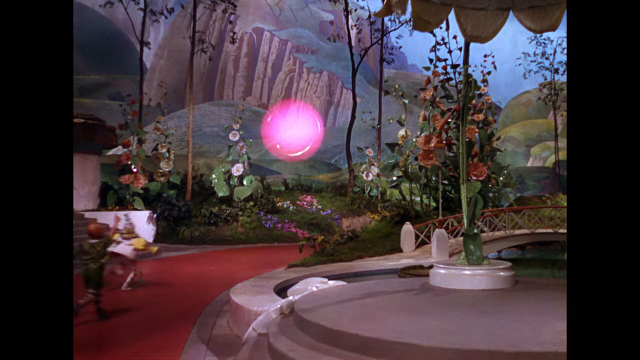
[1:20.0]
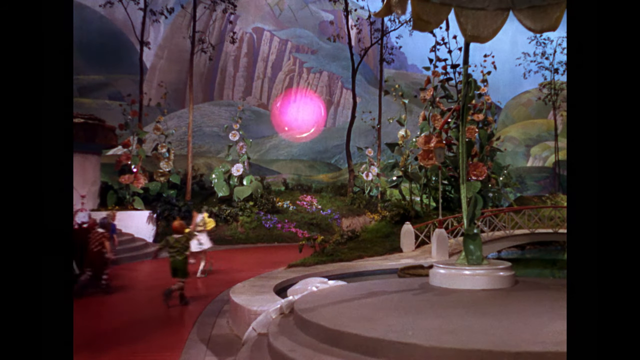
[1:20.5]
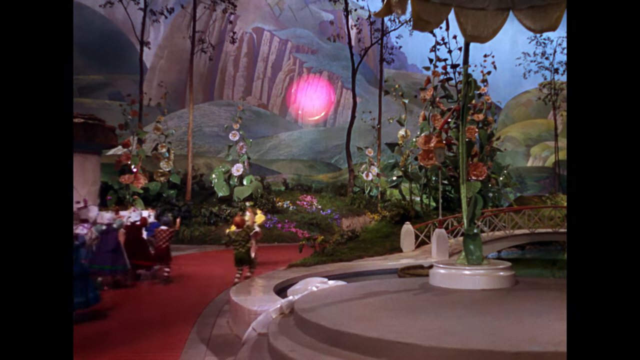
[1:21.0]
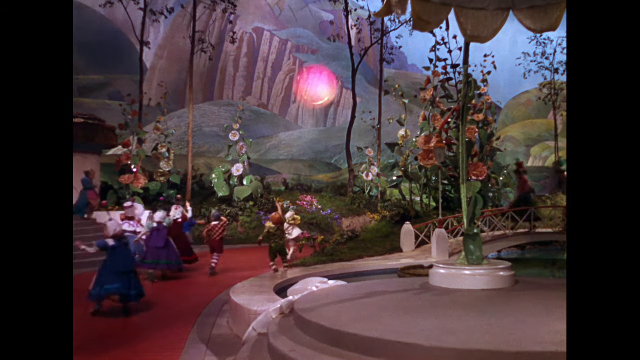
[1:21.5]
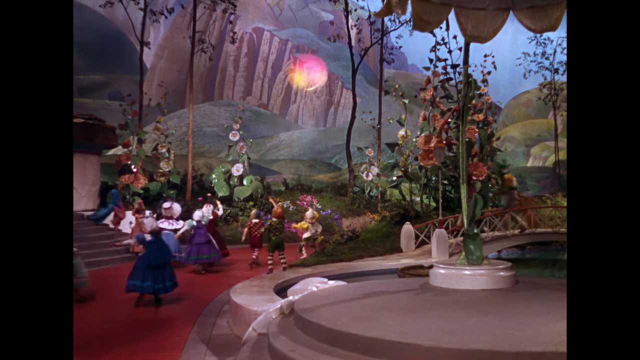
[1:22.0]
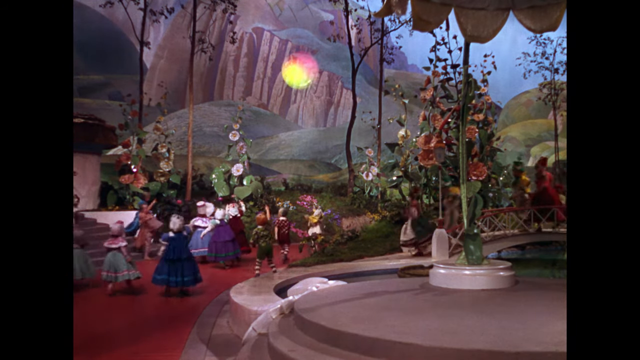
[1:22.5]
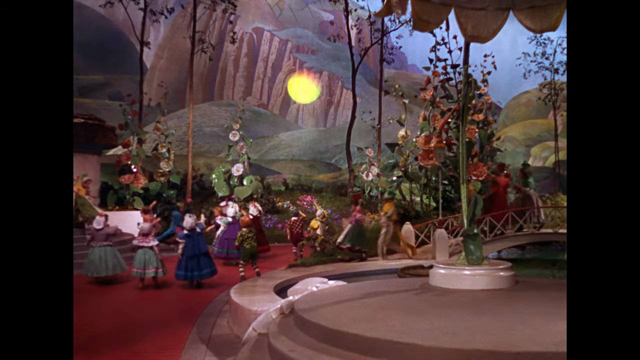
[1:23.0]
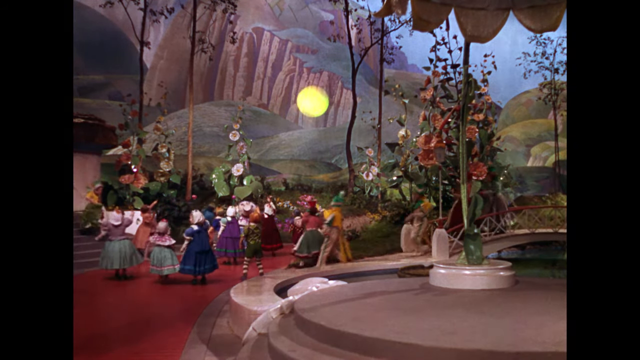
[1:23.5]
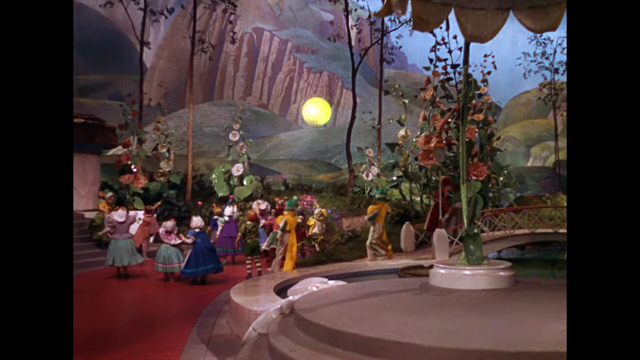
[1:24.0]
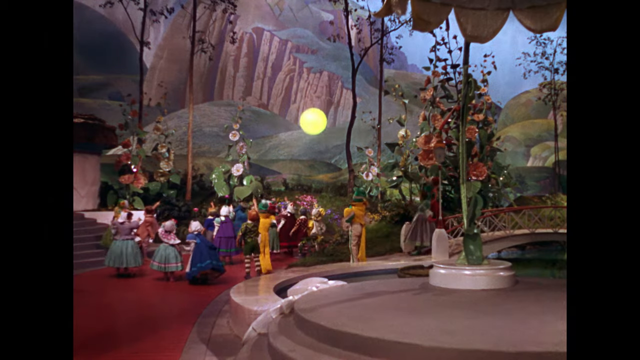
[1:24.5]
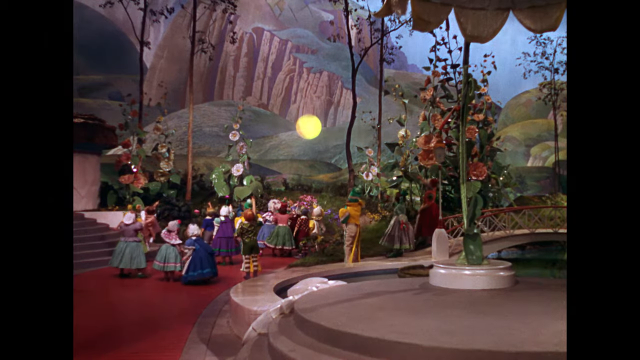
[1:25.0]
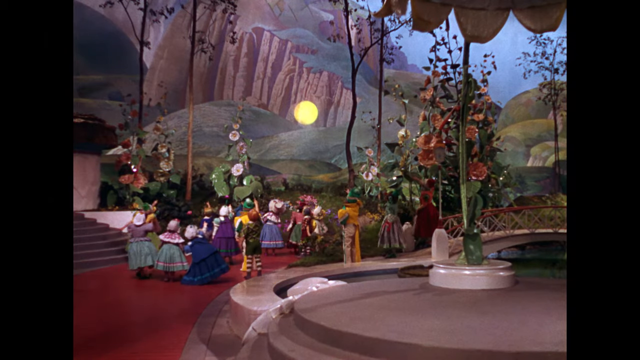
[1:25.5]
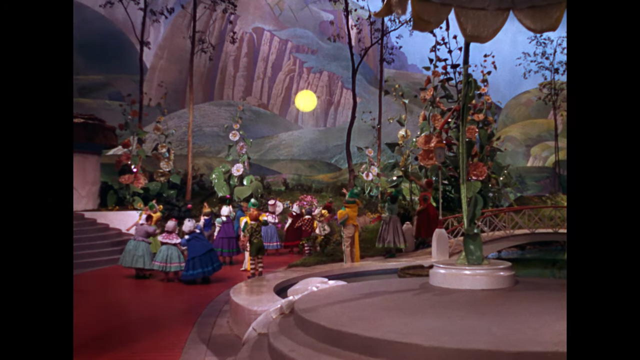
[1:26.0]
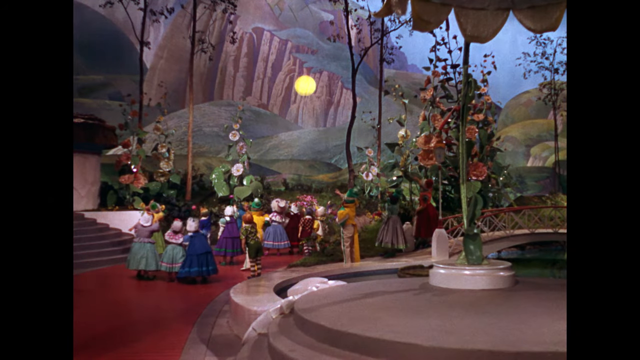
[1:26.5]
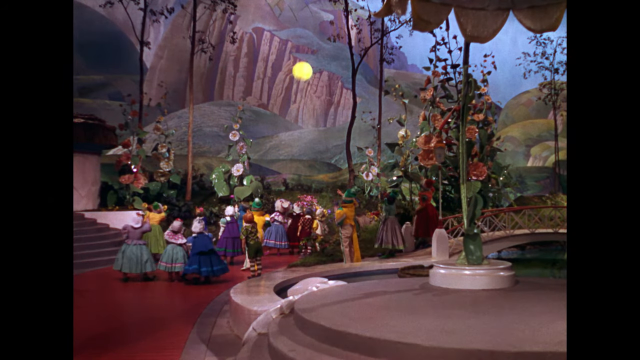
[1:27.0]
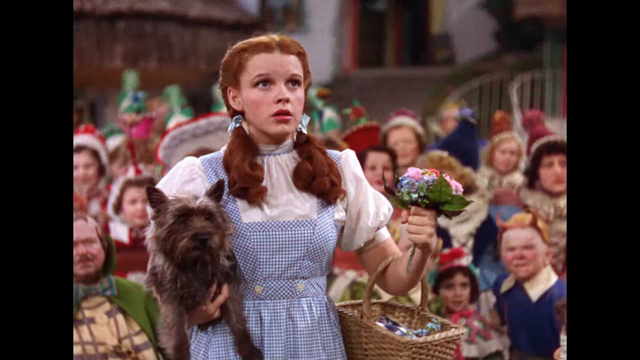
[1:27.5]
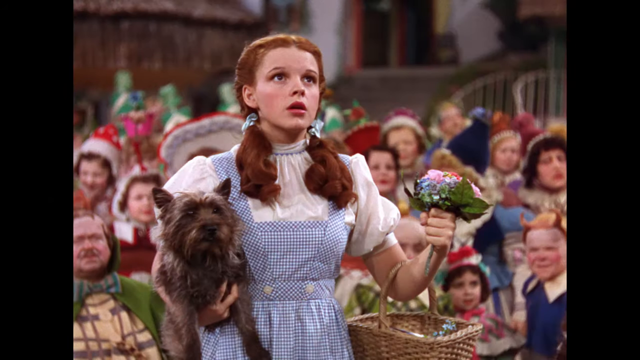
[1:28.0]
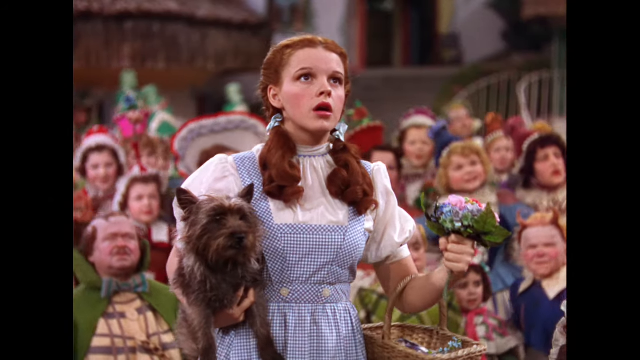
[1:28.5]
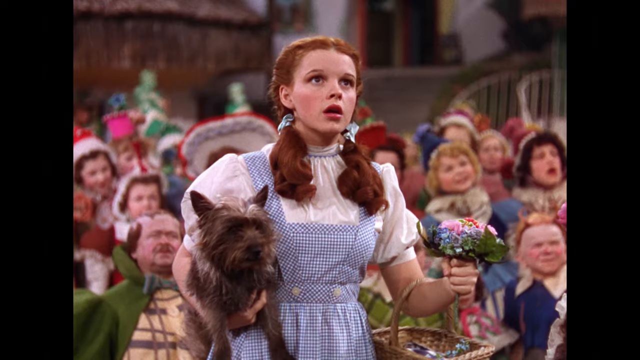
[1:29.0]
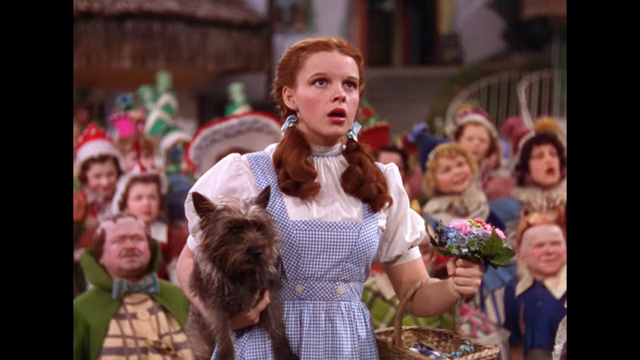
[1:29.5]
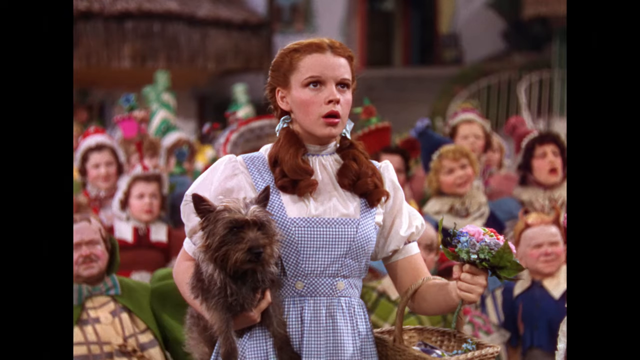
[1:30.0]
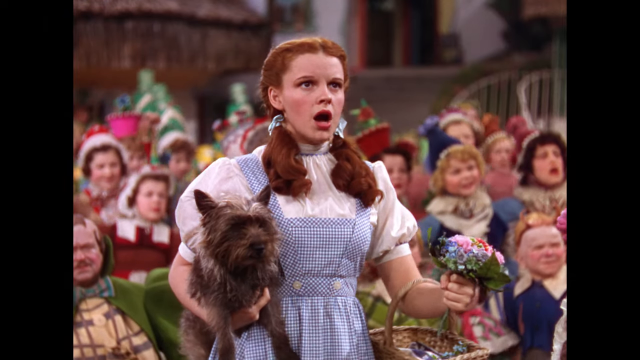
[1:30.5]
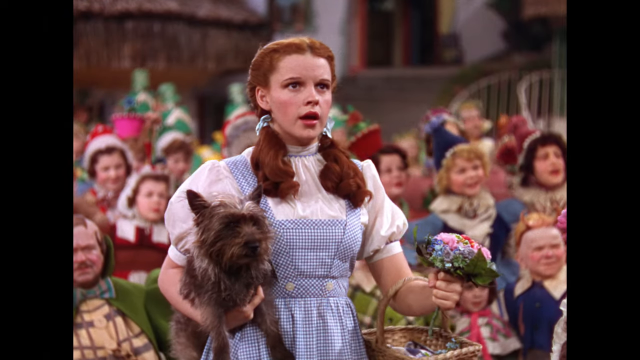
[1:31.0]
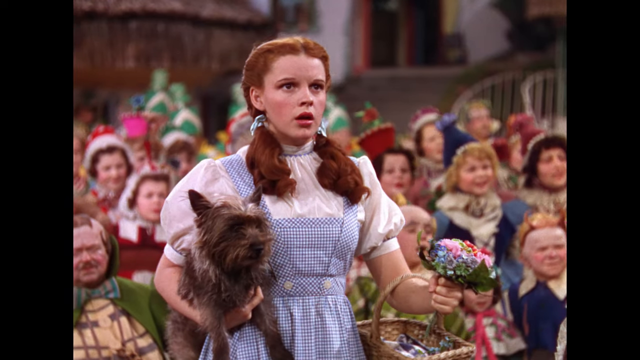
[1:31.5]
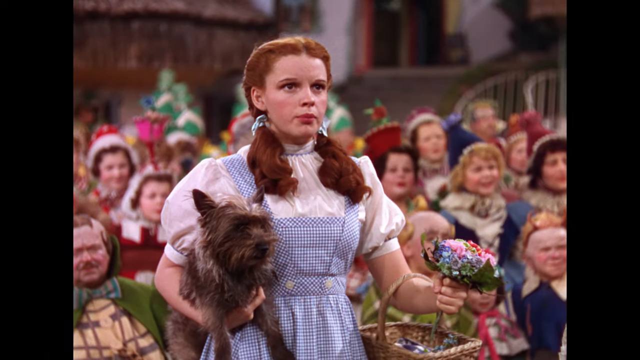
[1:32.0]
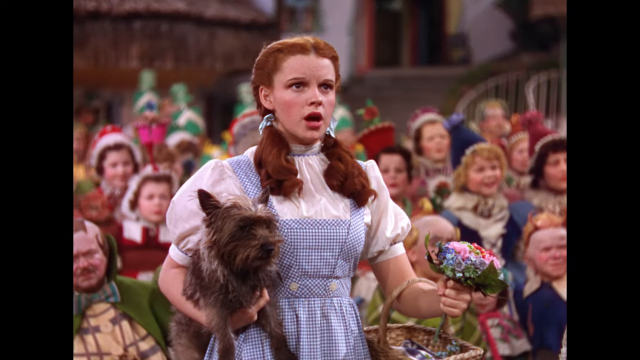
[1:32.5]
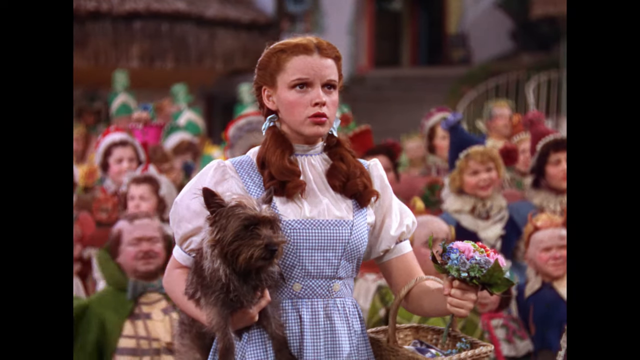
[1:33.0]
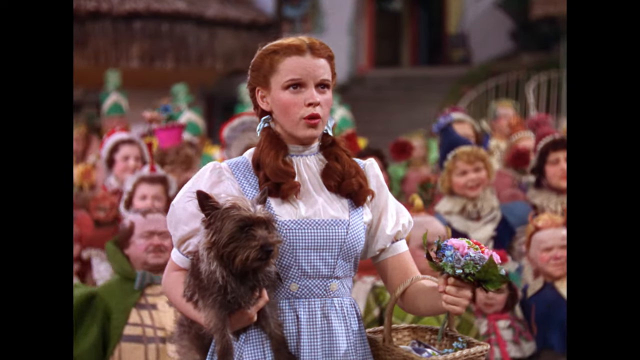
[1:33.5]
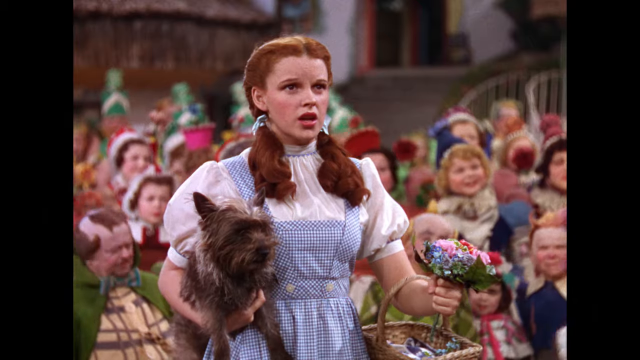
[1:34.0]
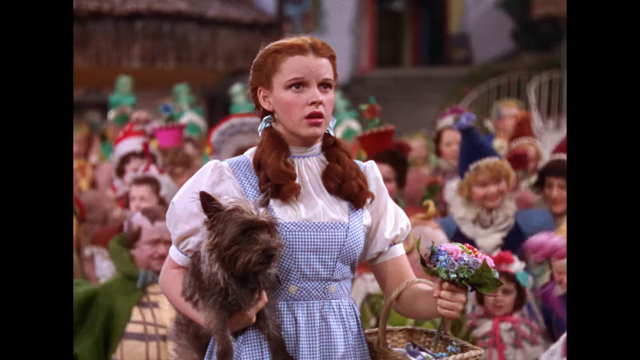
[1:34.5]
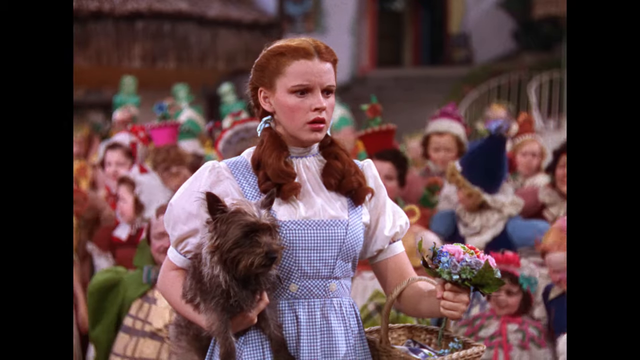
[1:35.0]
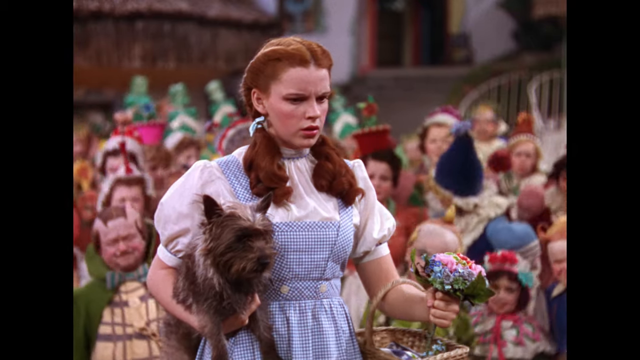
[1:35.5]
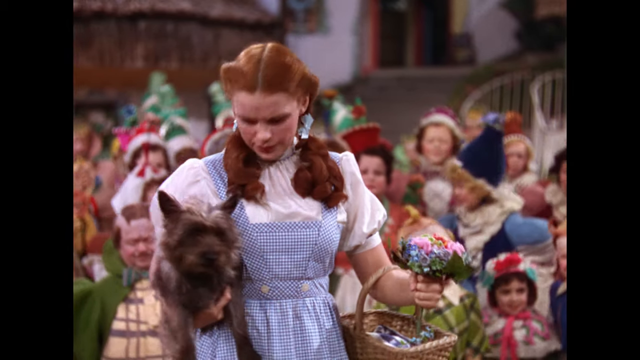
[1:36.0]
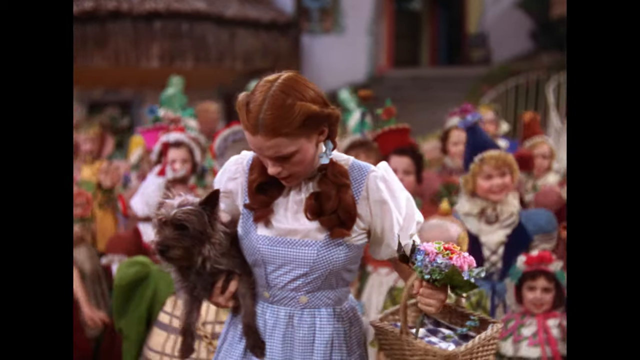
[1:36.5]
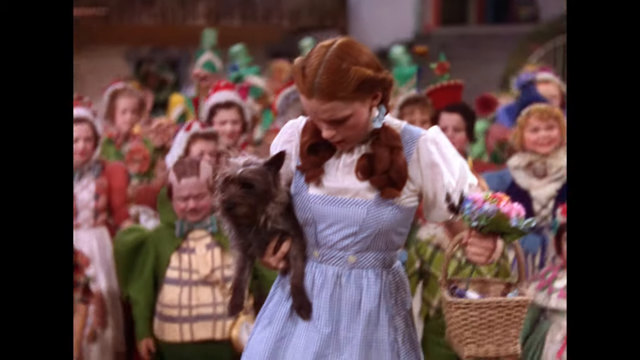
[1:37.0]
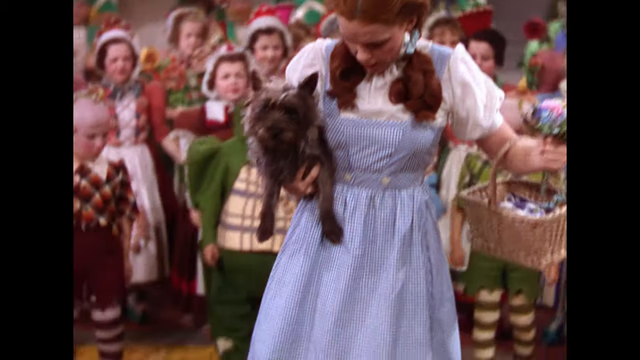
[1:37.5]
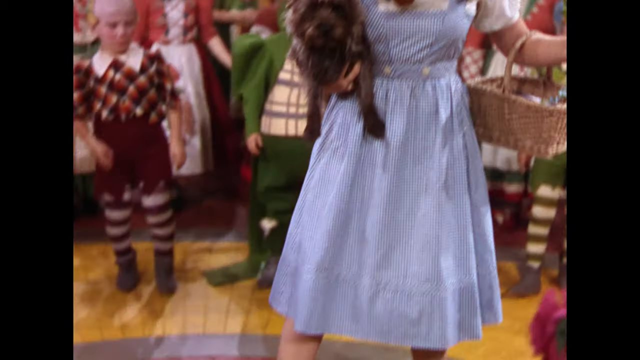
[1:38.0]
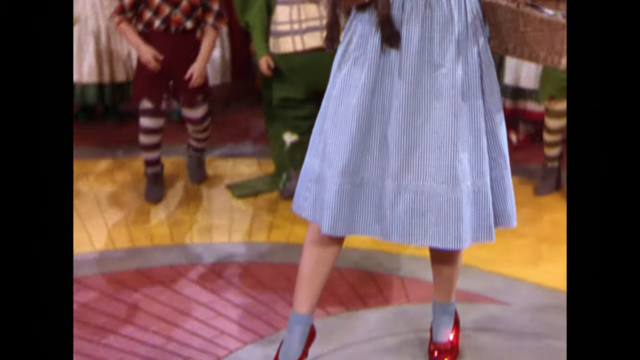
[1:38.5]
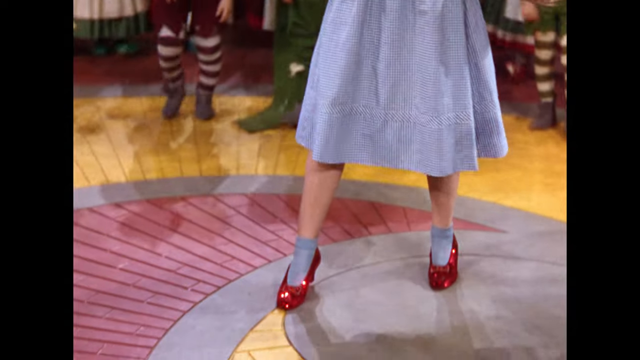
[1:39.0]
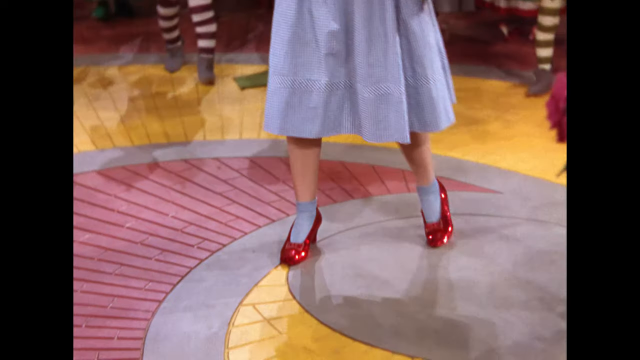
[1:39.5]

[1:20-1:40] A large bright pink ball floats in the air, up near the large hills on the backdrop of the stage. The small munchkins run toward the ball as if chasing it, reaching their arms up in the air. The ball turns yellow and keeps flying higher. The camera turns toward Dorothy, who wears a white puffy-sleeved top with her checkered blue and white dress and has her hair in pigtails. She holds her dog Toto, which looks like a small black terrier, under one arm, a small bouquet of flowers in her other hand, and a brown picnic basket around that elbow. She looks up at the ball flying away, looking somewhat shocked, with her mouth hanging open and her eyes wide. She begins speaking, and the crowd of munchkins in the background nods in agreement. Dorothy looks down at the floor, and the camera pans down to show the beginning of the curved yellow brick road. Dorothy, wearing bright red shiny shoes, takes a few steps onto the yellow brick road.